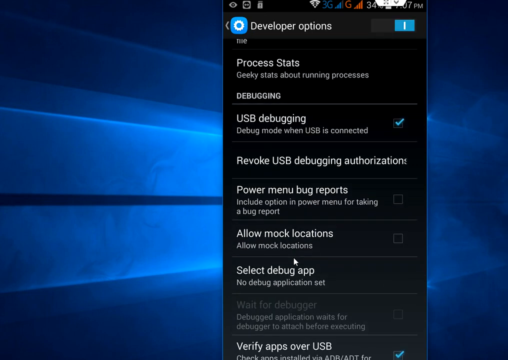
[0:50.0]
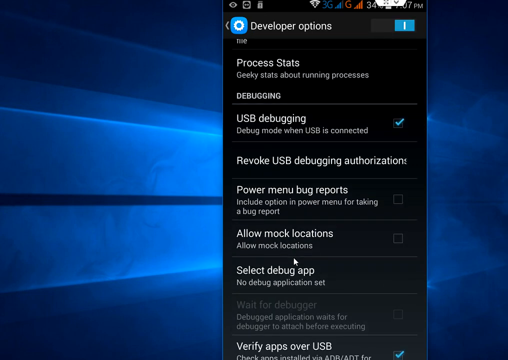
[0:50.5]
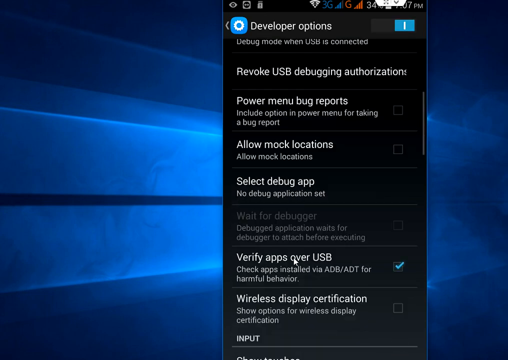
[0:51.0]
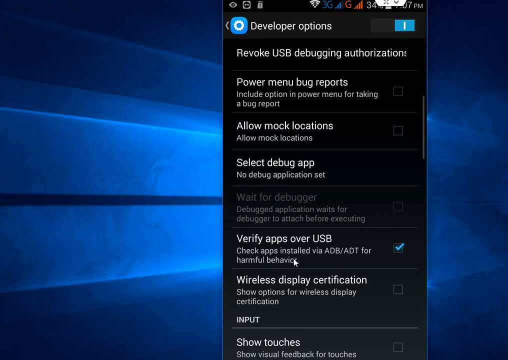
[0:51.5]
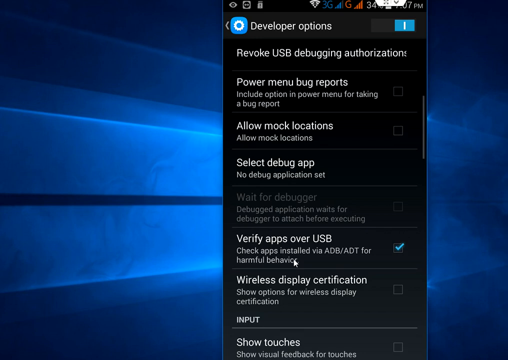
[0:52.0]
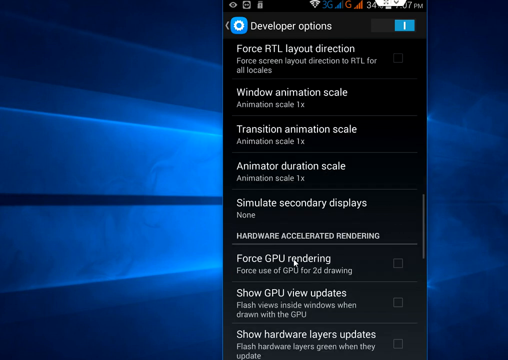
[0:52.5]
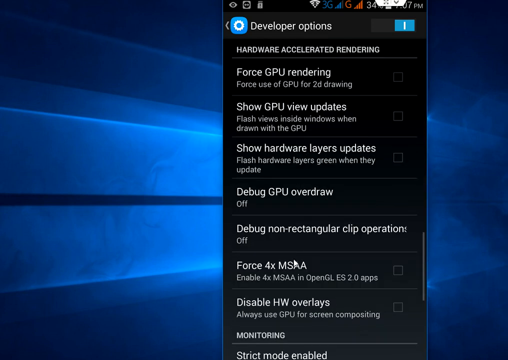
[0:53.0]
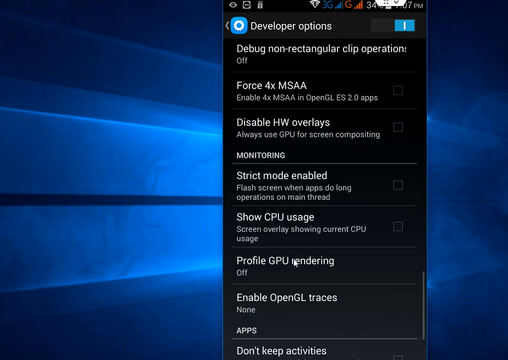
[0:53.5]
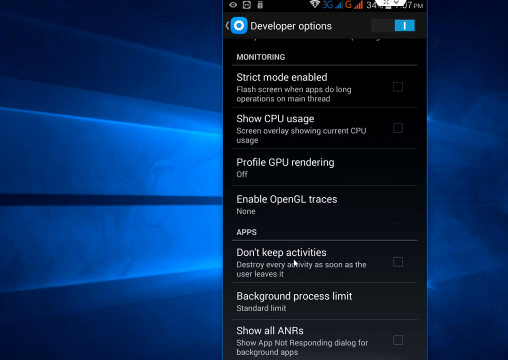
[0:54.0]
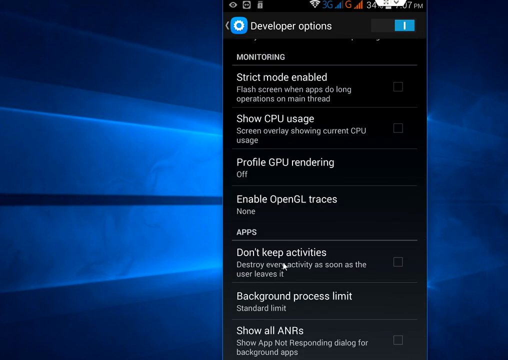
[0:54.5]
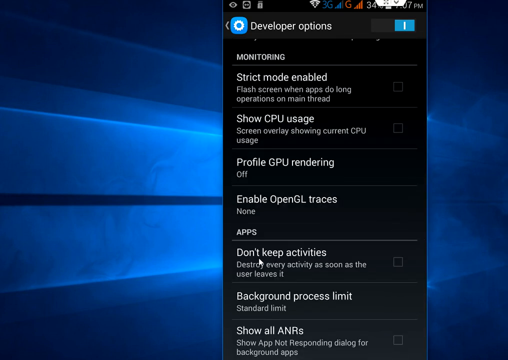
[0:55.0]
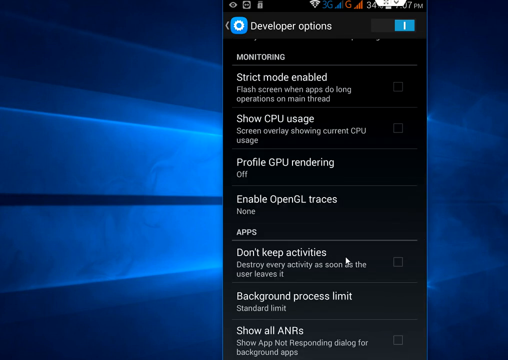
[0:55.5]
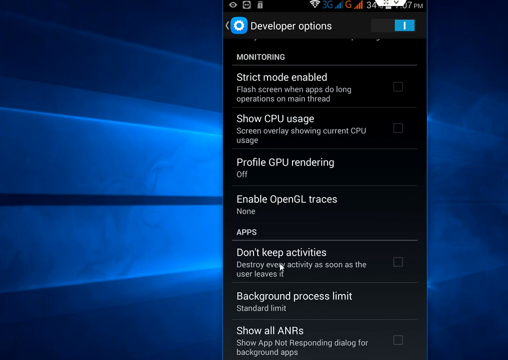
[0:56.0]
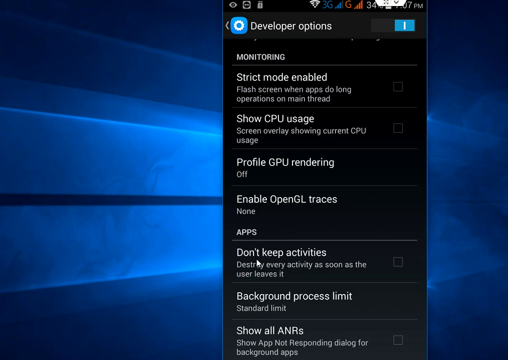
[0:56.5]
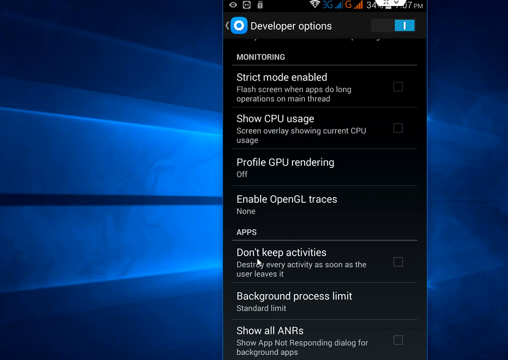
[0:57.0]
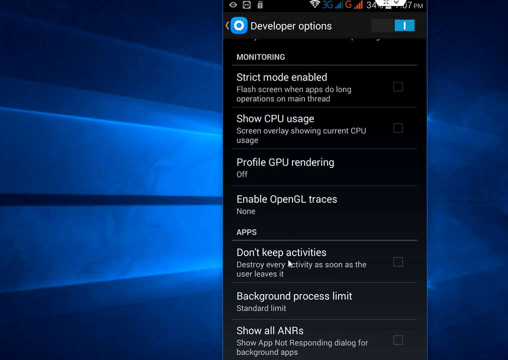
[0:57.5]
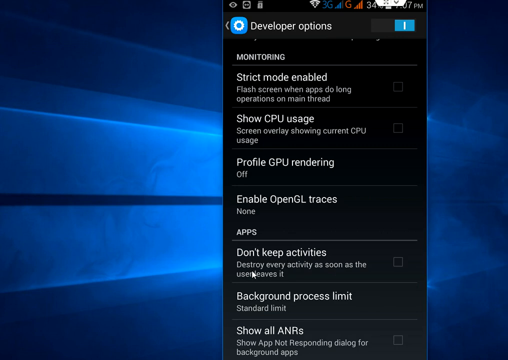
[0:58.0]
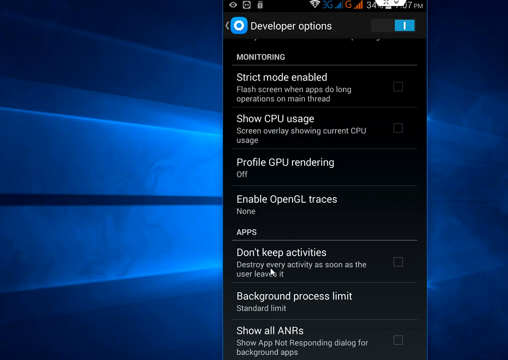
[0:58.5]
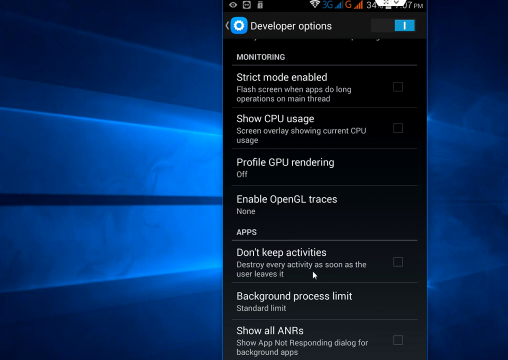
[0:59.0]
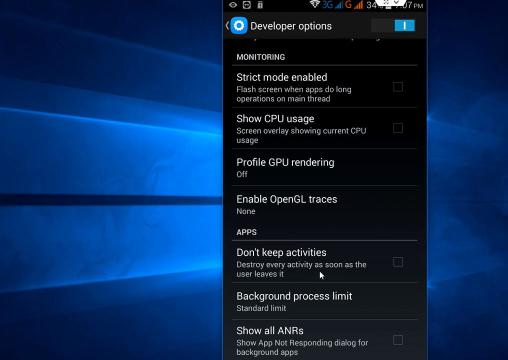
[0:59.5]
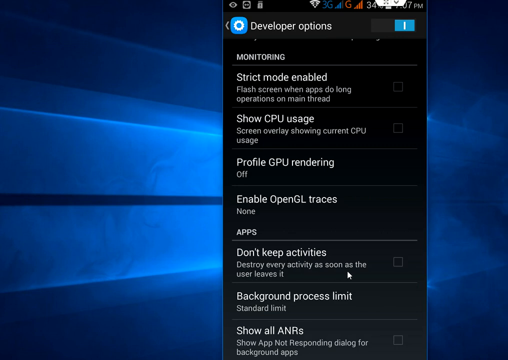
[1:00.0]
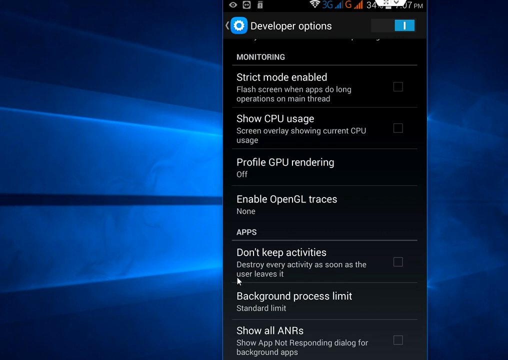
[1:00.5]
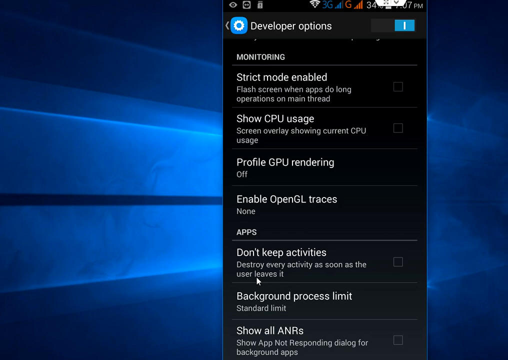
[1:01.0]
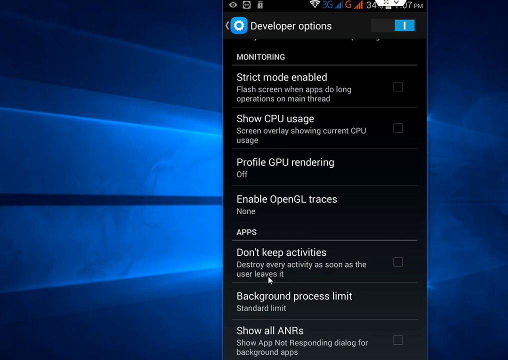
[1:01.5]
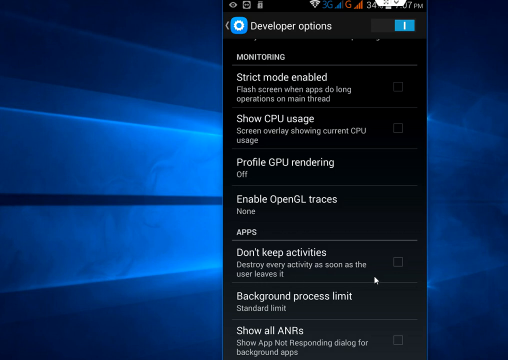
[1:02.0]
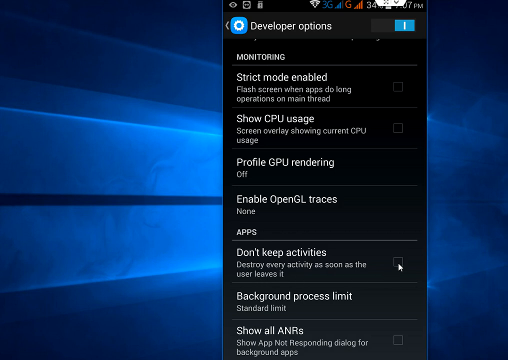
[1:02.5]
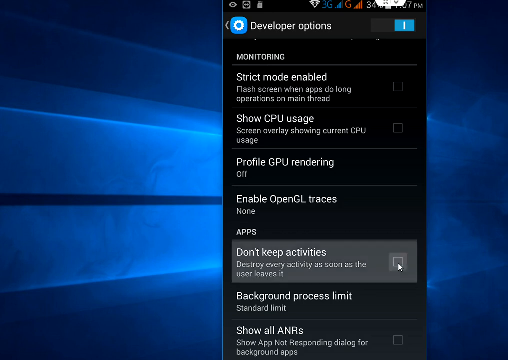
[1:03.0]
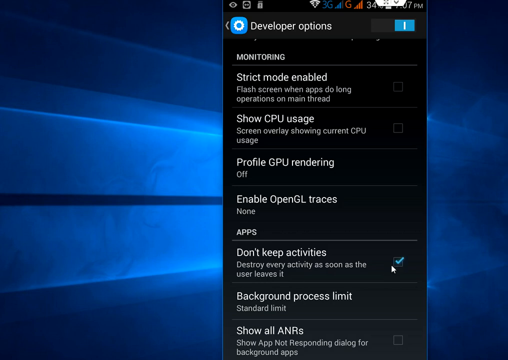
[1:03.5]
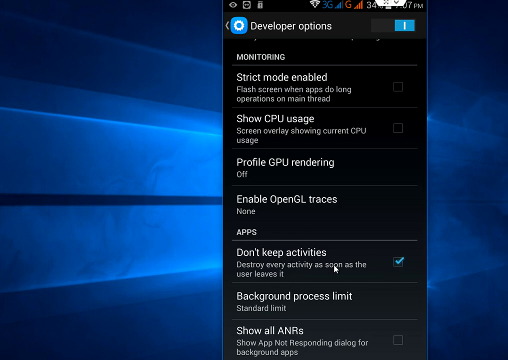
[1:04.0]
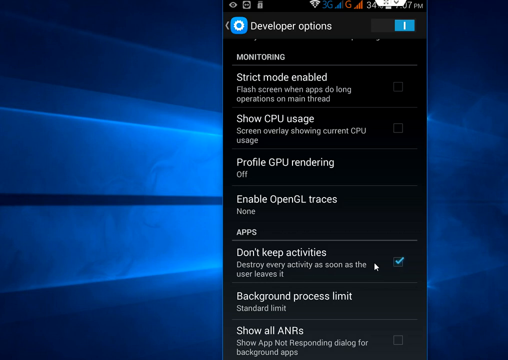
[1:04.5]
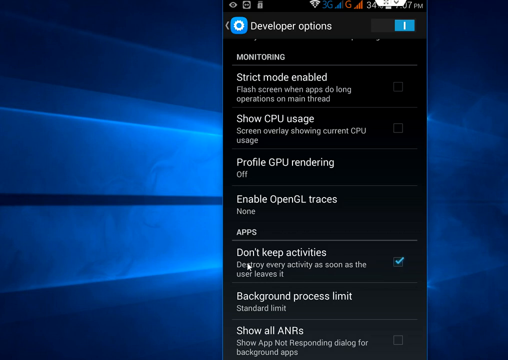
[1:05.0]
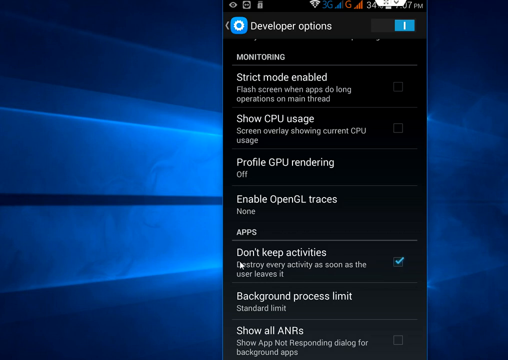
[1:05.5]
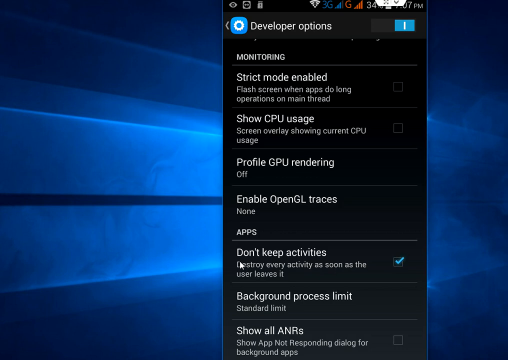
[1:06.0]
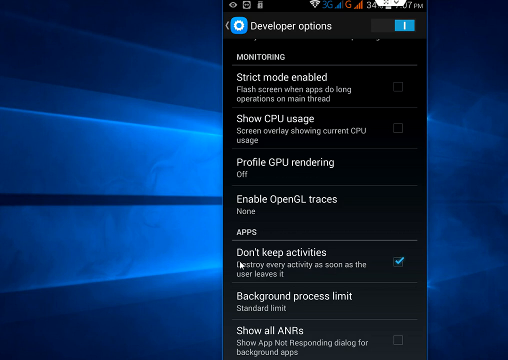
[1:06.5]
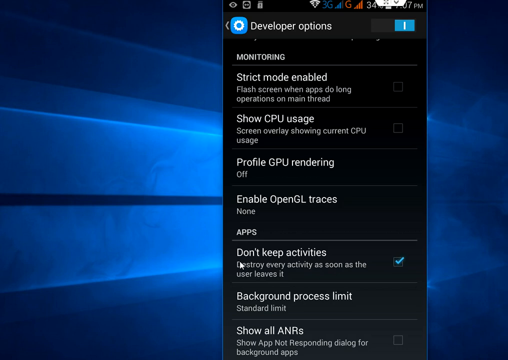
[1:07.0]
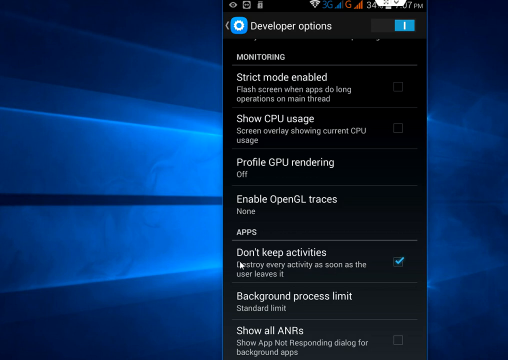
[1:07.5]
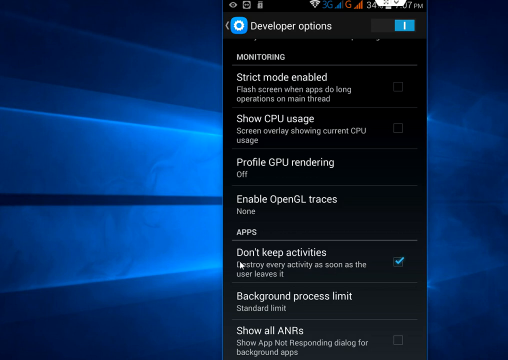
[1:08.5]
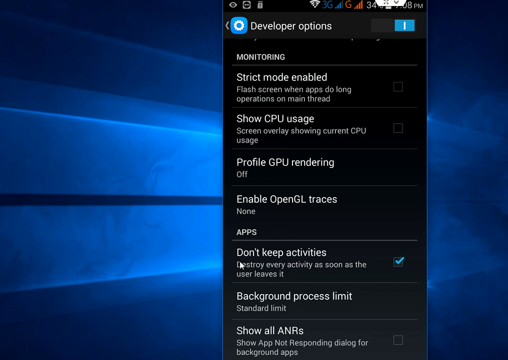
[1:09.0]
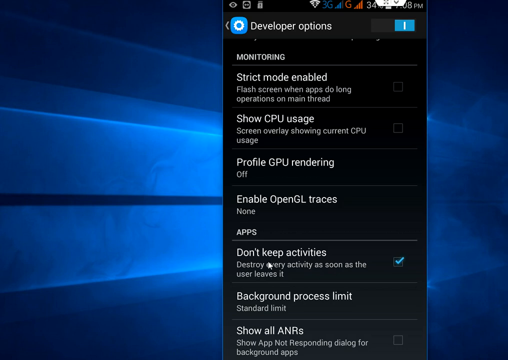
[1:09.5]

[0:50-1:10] Still on the developer options page, the person scrolls down, and multiple options flash by that have to do with things like GPU rendering and different types of overlays. The menu stops with the Monitoring heading at the top. Under it are the options strict mode enabled, show CPU usage, profile GPU rendering and enable OpenGL traces. Beneath that is the Apps heading with the option don't keep activities, whose subheading reads "destroy every activity as soon as the user leaves it," with an empty checkbox to the right. Below this option are background process limit and show all ANRs. The person moves his cursor over the words of the don't keep activities option, as if reading along with the cursor, and at the end of the subheading's last sentence clicks the empty checkbox. A blue check mark appears, and the cursor stops over the D in "destroy."